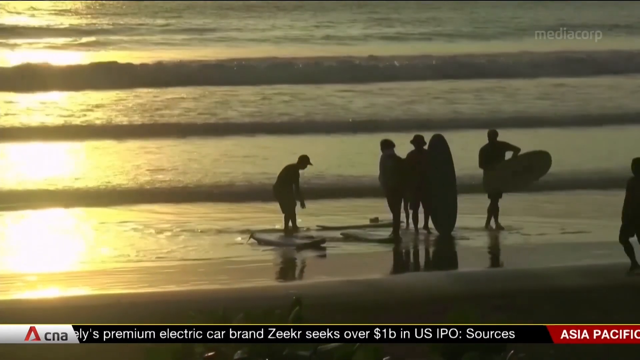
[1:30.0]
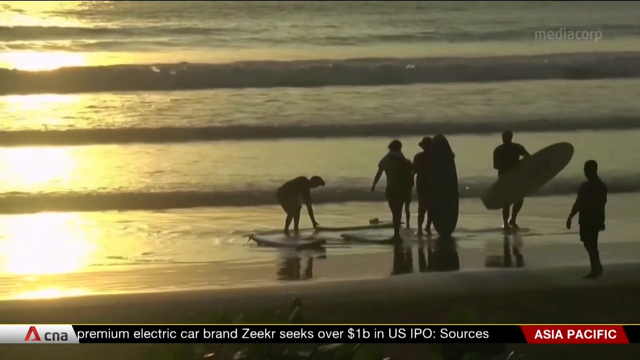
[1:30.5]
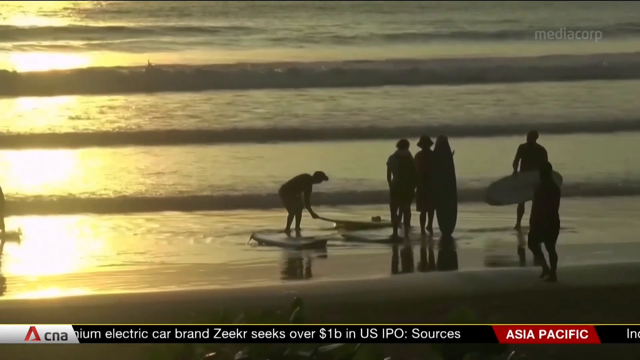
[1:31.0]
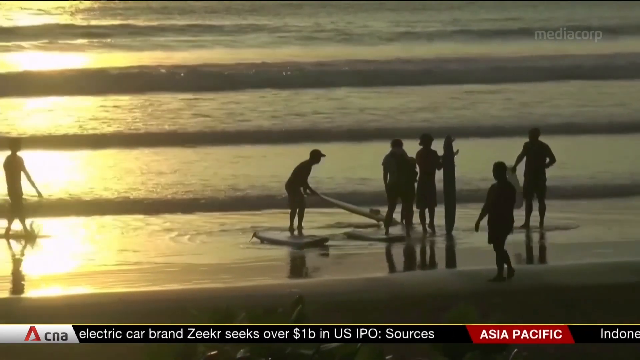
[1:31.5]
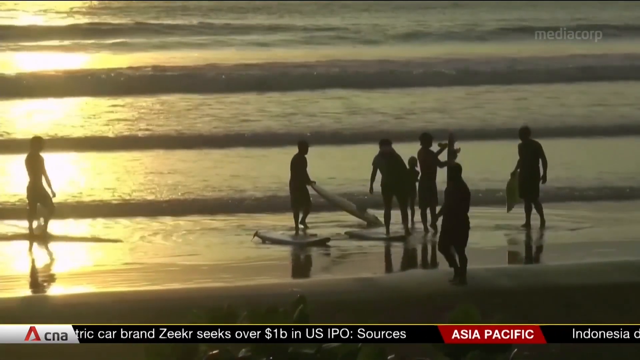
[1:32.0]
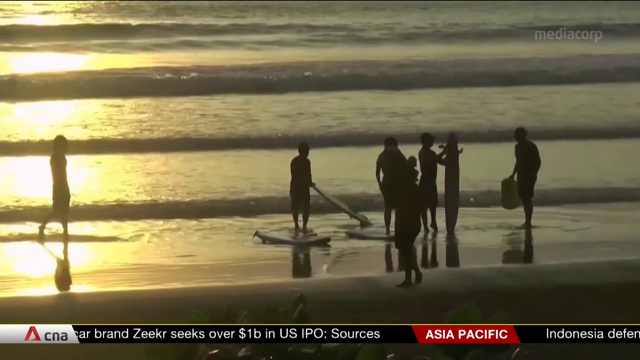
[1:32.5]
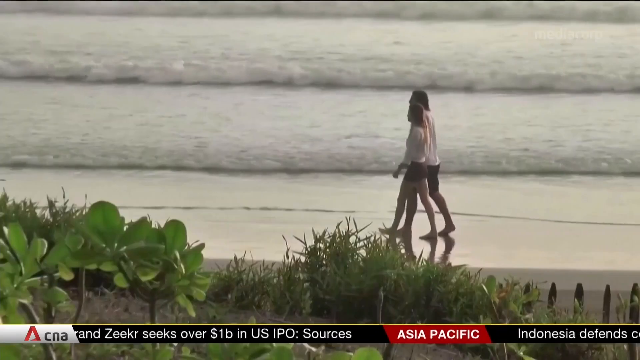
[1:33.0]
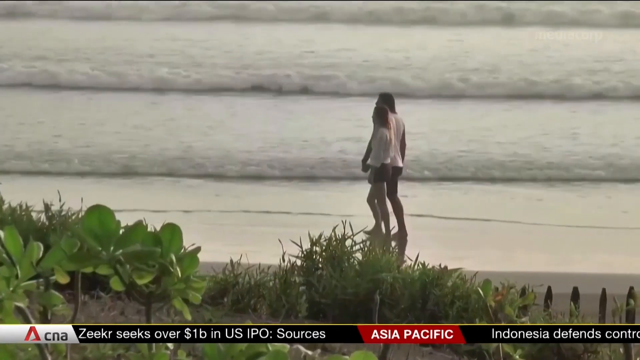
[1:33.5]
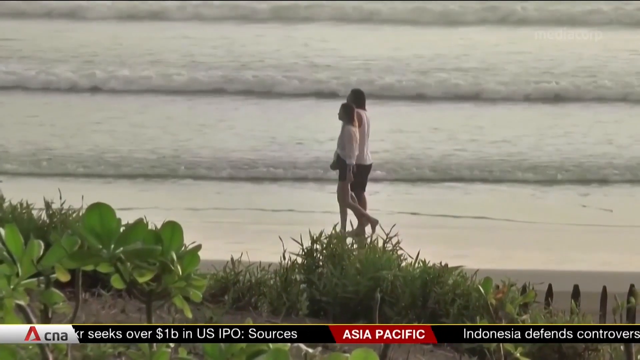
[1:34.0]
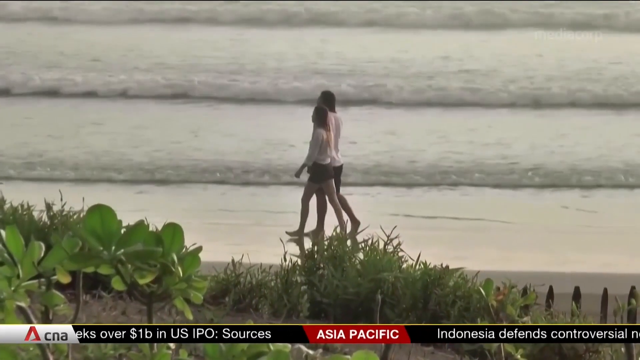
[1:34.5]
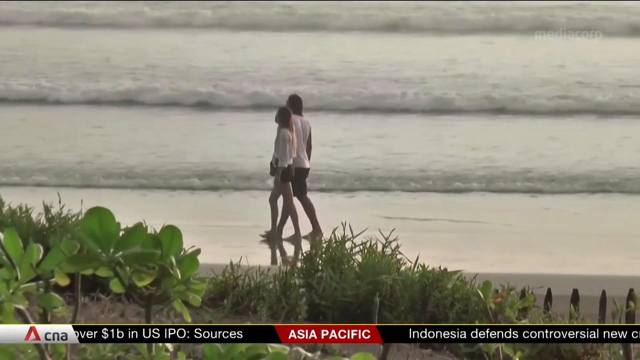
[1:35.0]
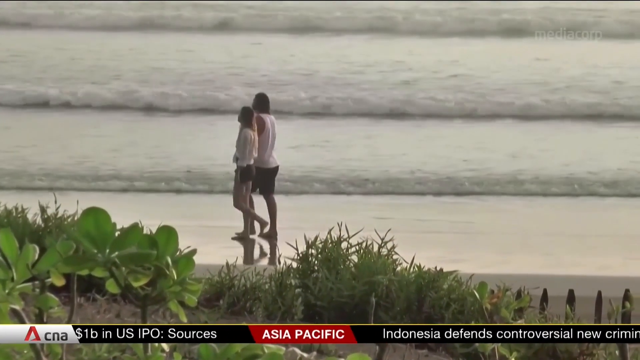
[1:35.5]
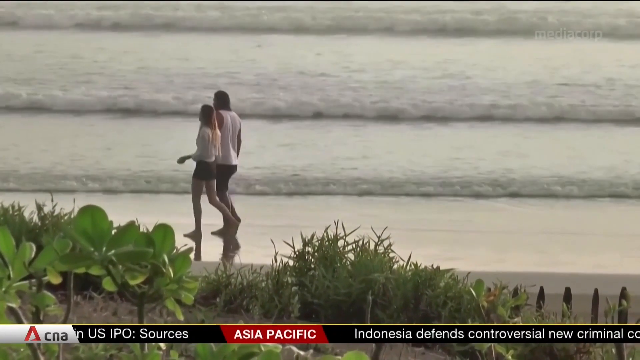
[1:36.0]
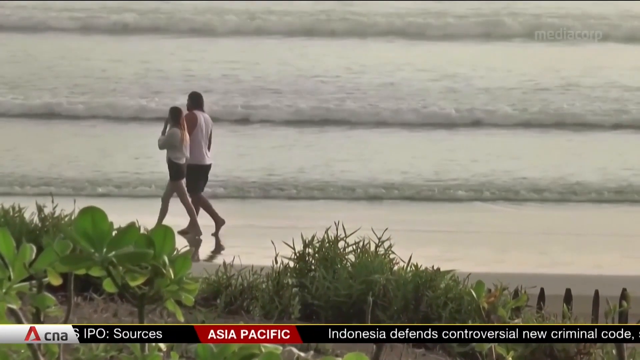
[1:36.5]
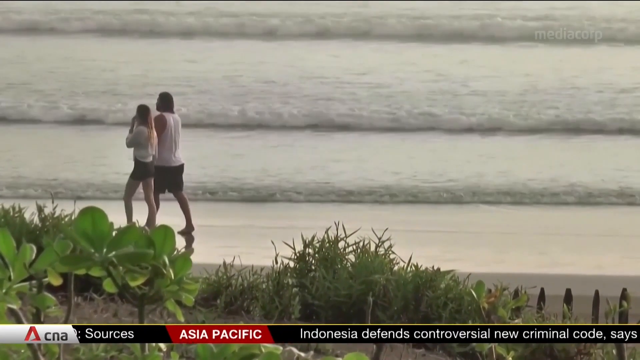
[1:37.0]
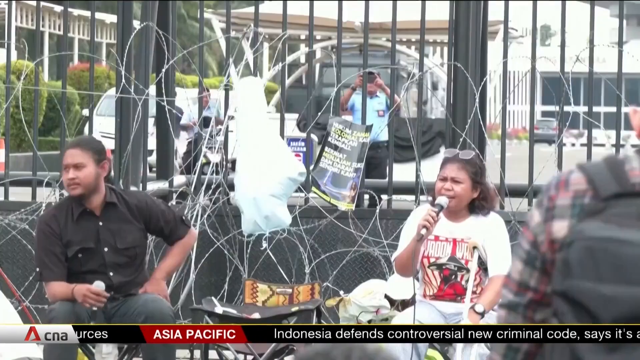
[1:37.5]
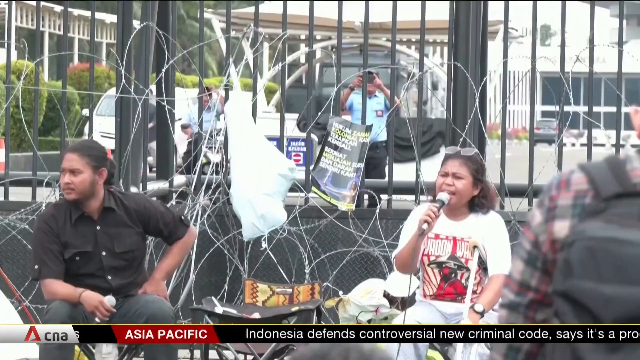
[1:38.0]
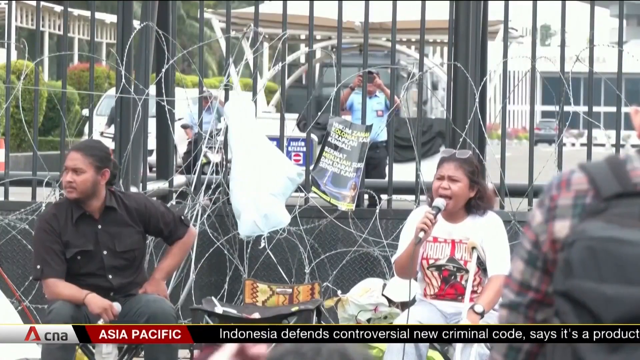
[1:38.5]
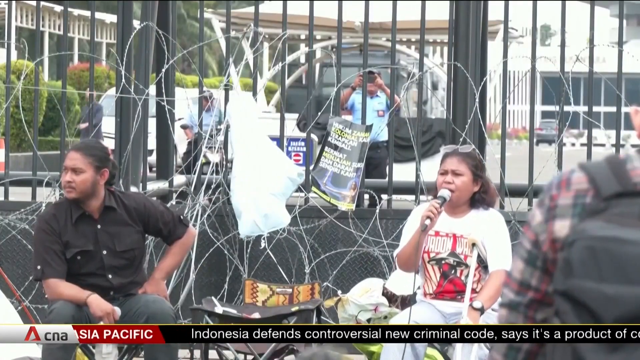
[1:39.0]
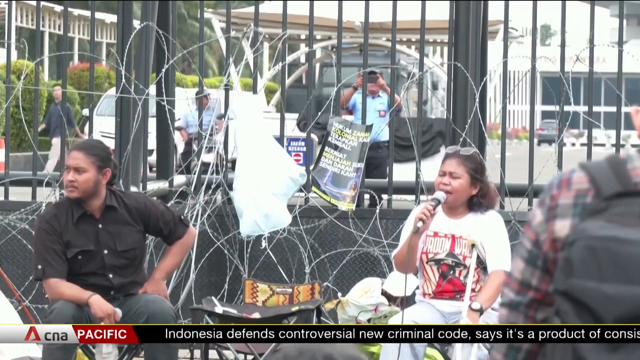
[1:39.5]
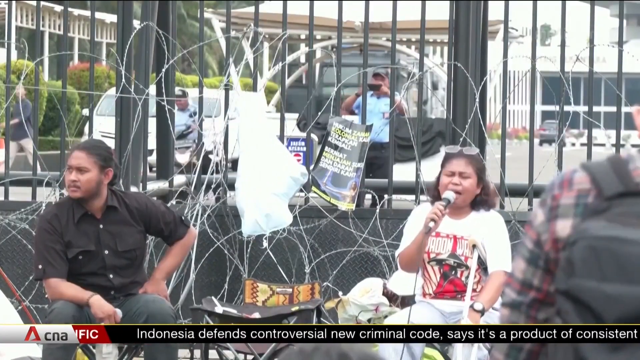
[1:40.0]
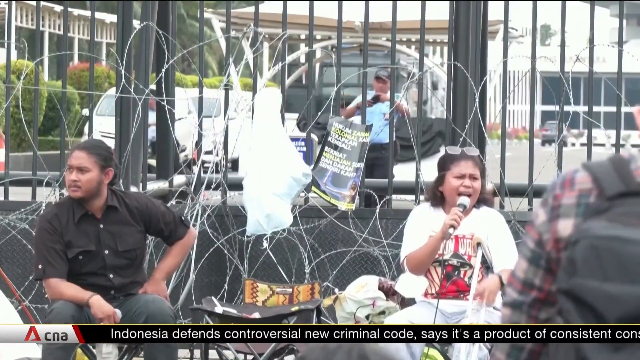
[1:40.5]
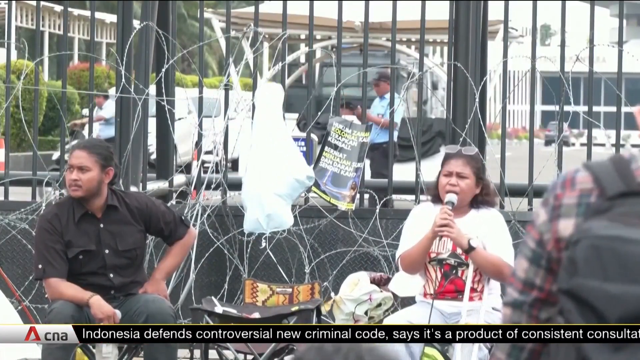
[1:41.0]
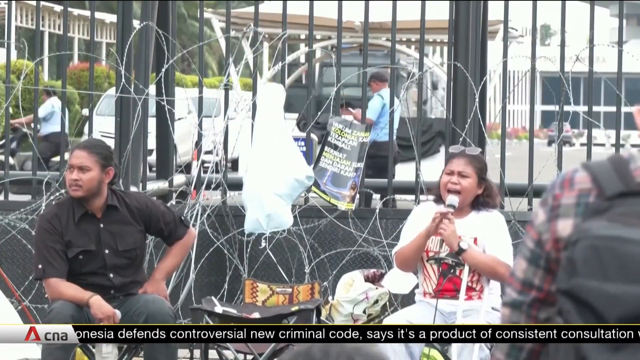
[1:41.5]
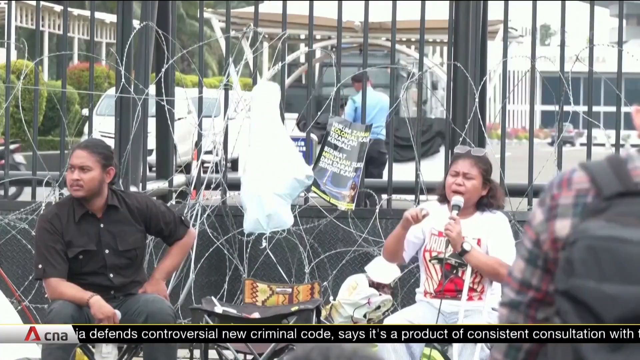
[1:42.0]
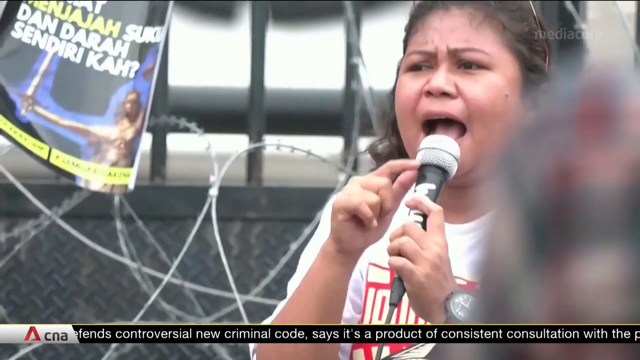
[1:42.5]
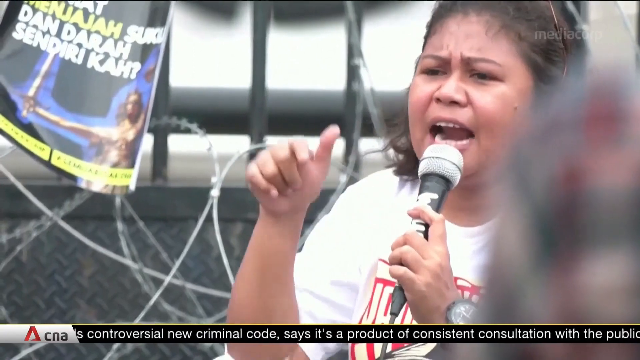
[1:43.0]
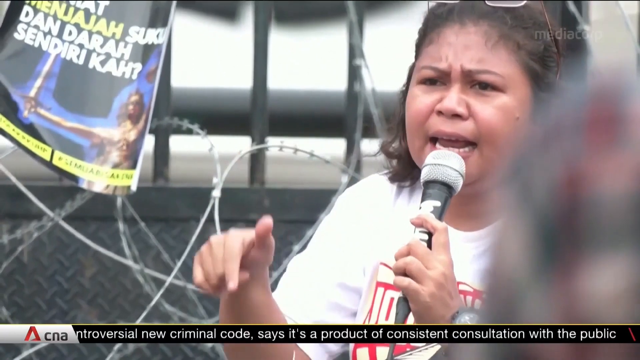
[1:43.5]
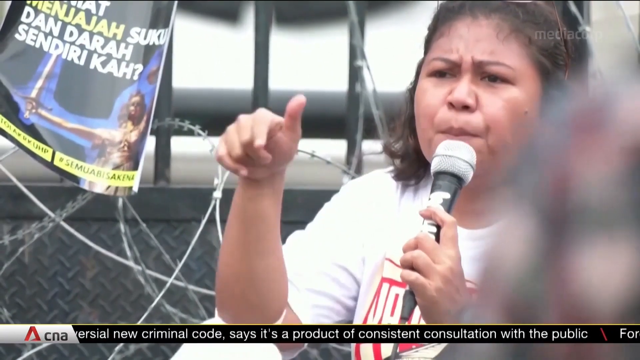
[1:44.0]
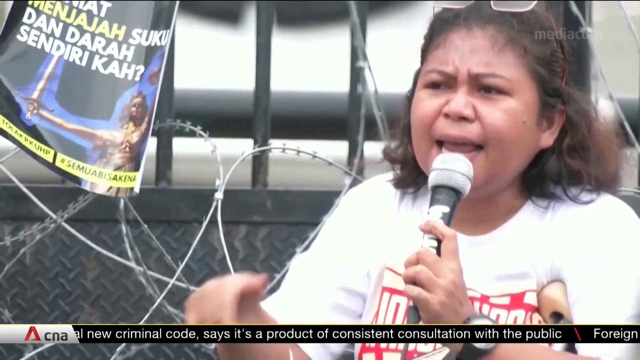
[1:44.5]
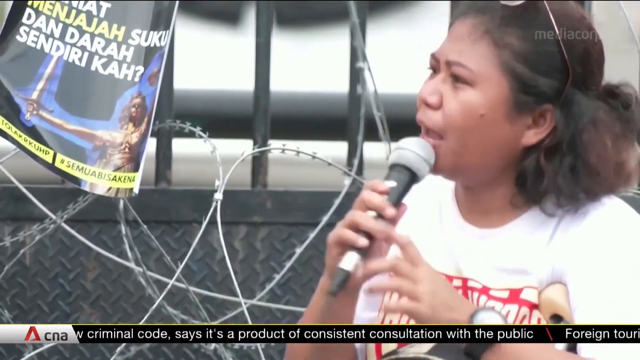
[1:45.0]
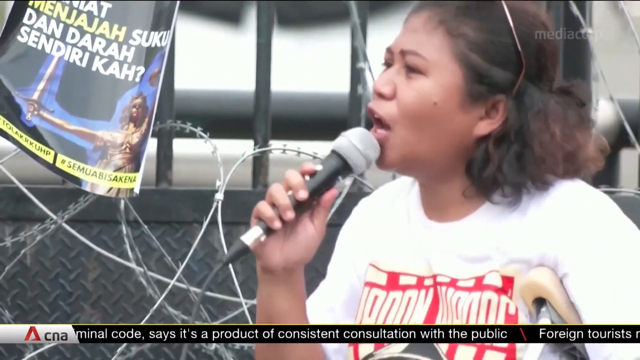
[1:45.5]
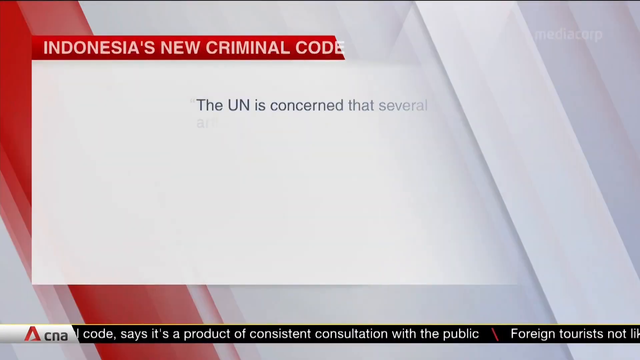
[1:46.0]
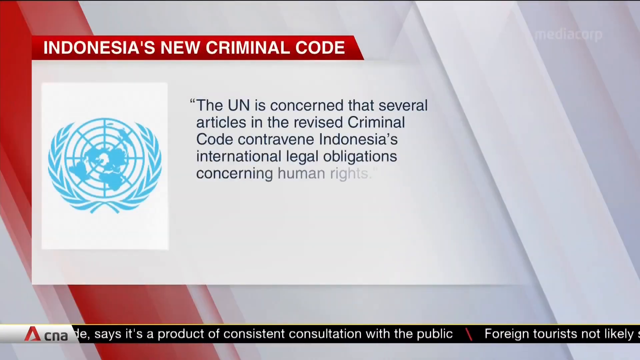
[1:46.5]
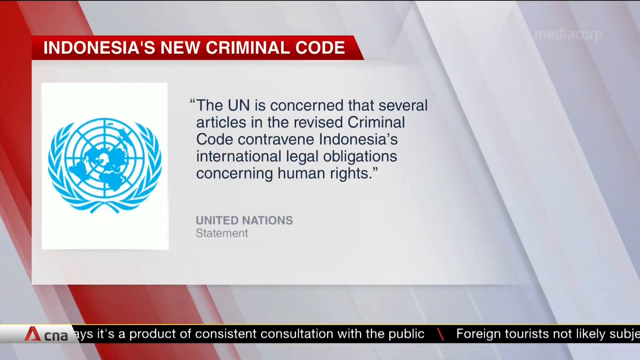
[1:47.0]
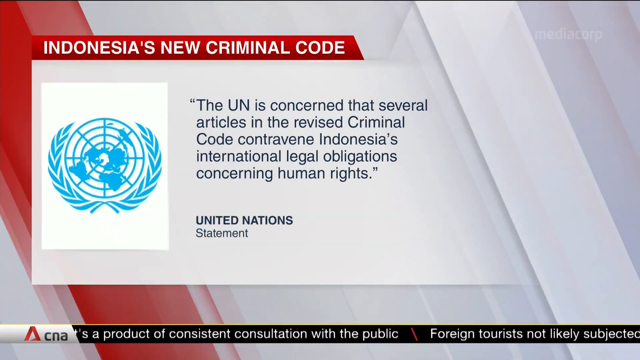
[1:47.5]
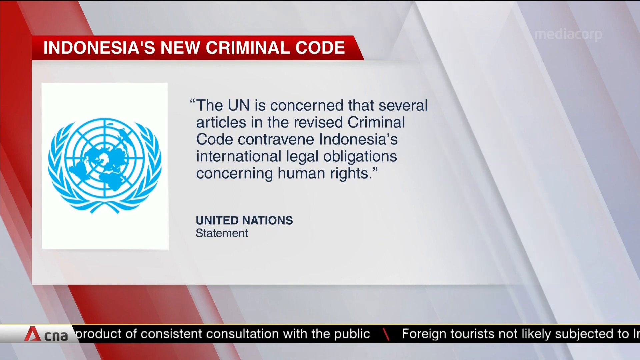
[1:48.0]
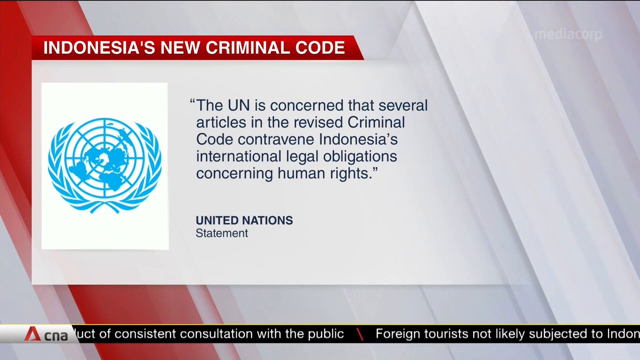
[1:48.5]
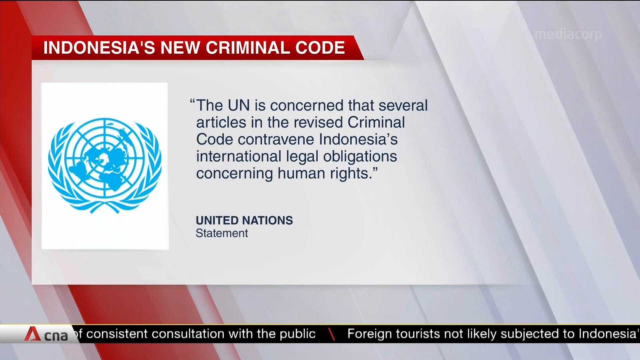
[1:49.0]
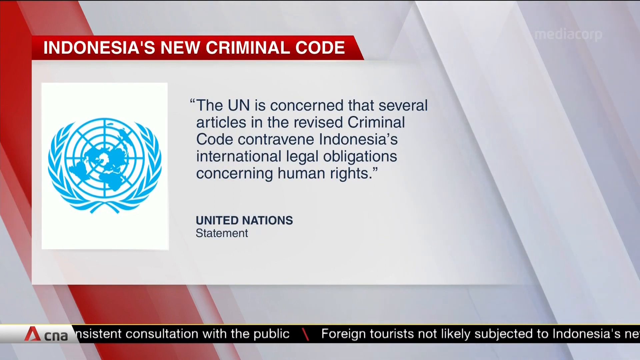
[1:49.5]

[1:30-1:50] About seven people, roughly four adults and three children, are on a beach with three paddle boards, all kind of standing on the sand. The sun shines on the ocean, which looks a little choppy with a couple of small waves, and its glare reflects off the water. Two people in white shirts and shorts walk along the beach holding each other's hands. Plants are shown, and then people sit in front of a black metal bar with poles that seems to be an entrance or gate. A woman with roughly shoulder-length hair wears a white shirt with glasses on top of her head and holds a black microphone; a man in a black shirt with sleeves to his elbows sits with her as they talk. There is barbed wire where she sits, and people are behind her, including a woman in a blue shirt. Next to her is something with writing in a different language that looks like a magazine. Two people are also shown talking to each other in front of a building, by something like a metal pole.